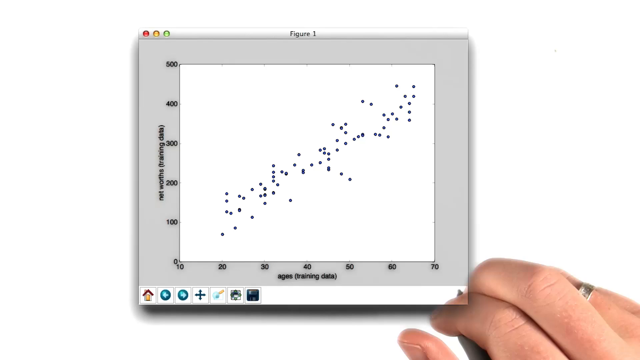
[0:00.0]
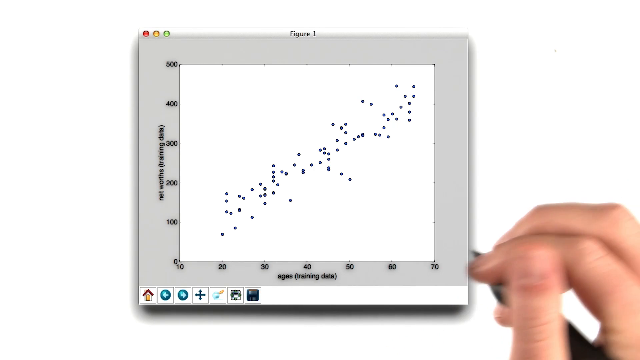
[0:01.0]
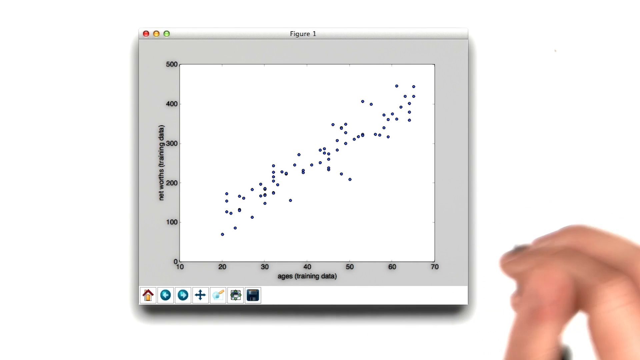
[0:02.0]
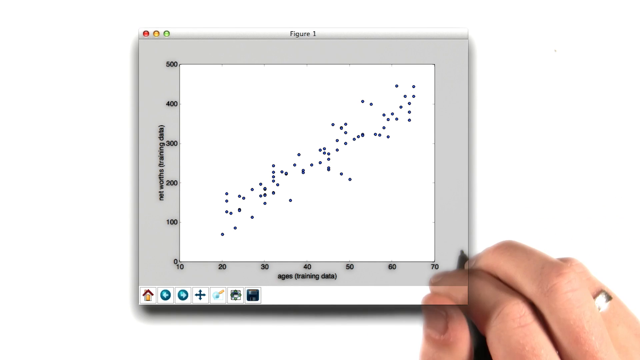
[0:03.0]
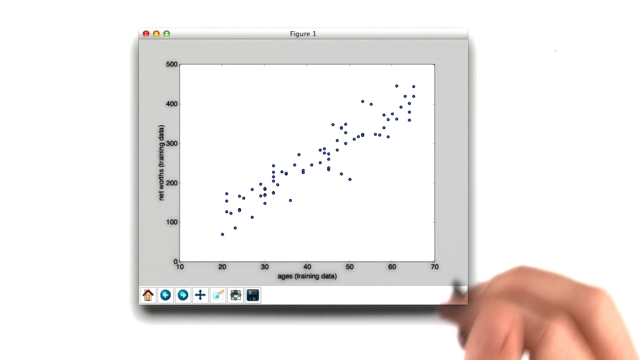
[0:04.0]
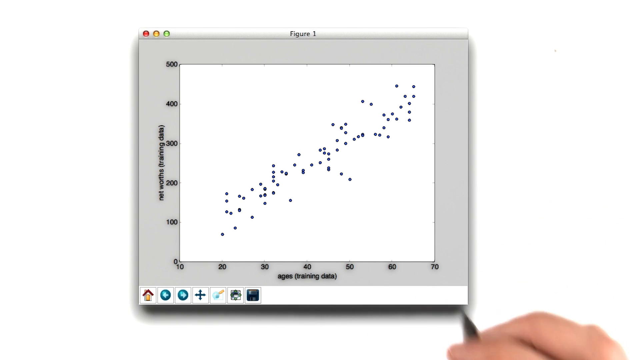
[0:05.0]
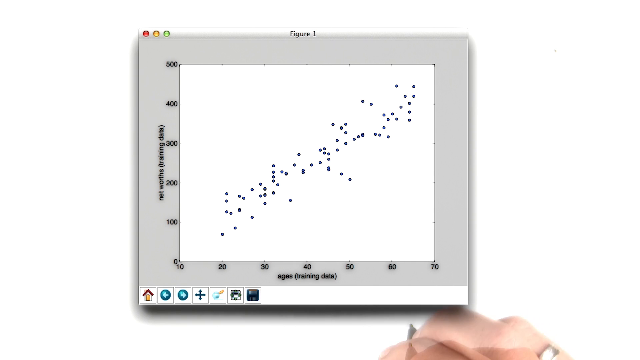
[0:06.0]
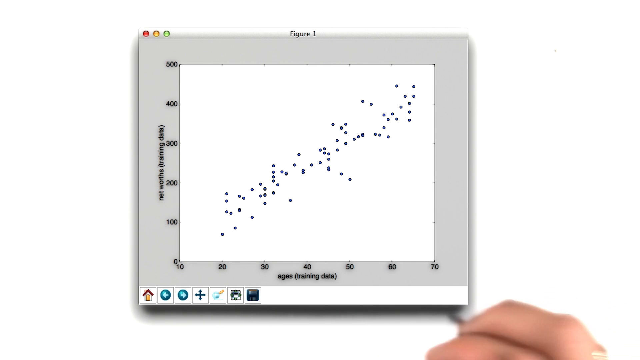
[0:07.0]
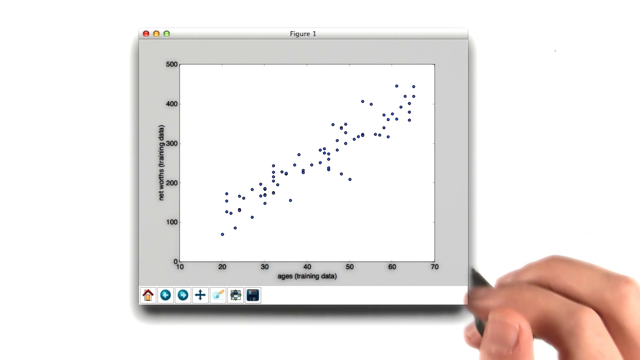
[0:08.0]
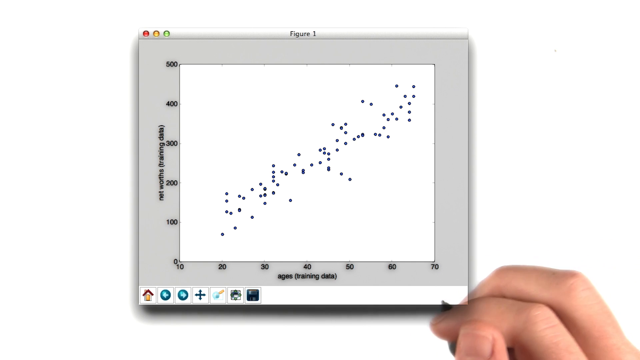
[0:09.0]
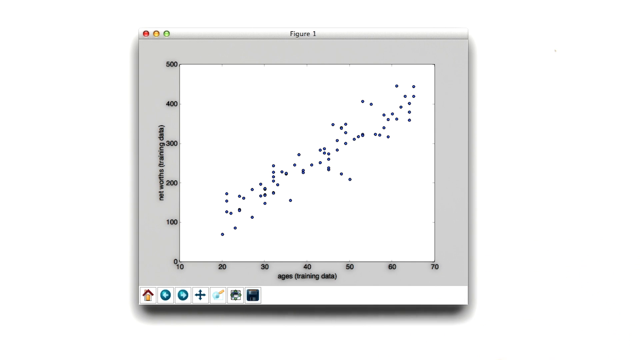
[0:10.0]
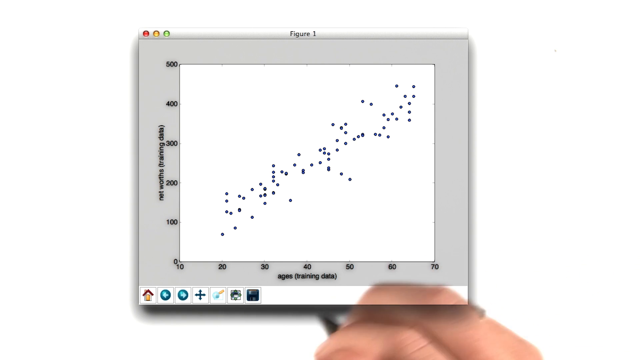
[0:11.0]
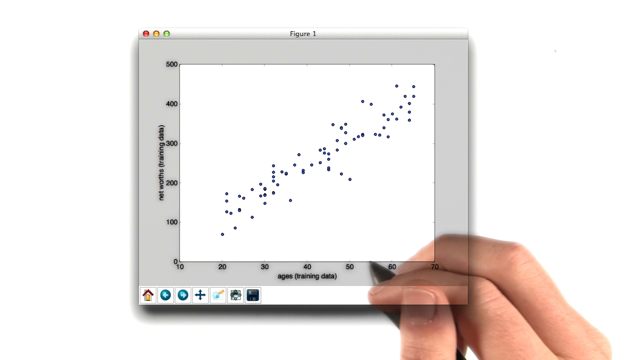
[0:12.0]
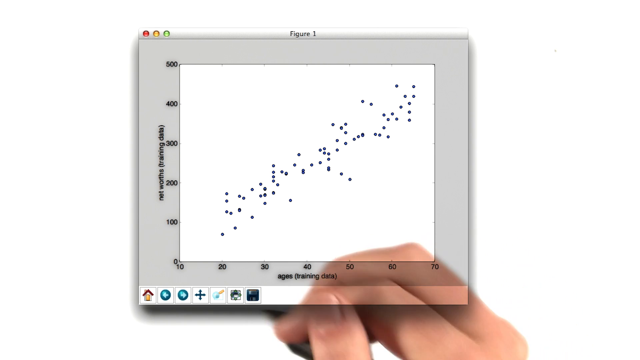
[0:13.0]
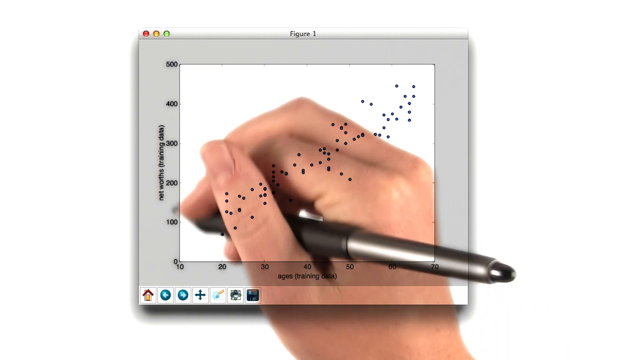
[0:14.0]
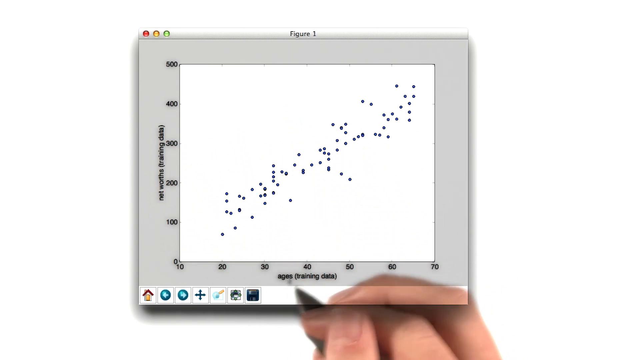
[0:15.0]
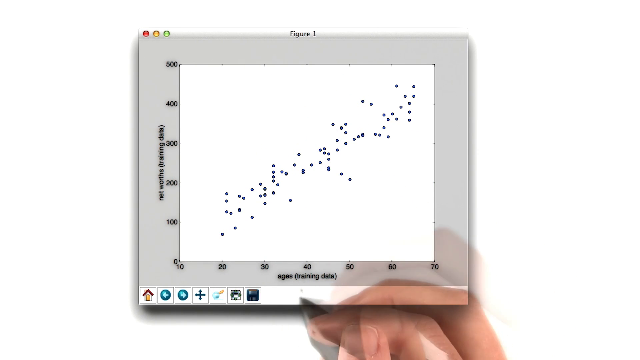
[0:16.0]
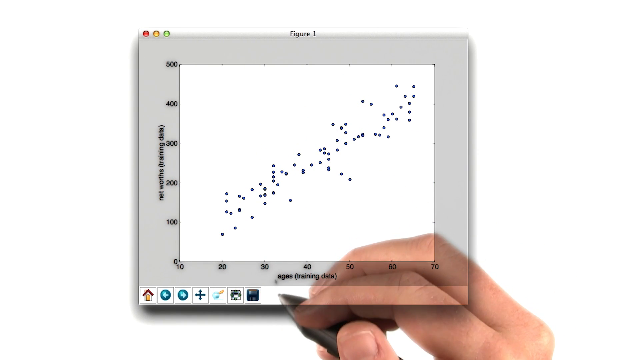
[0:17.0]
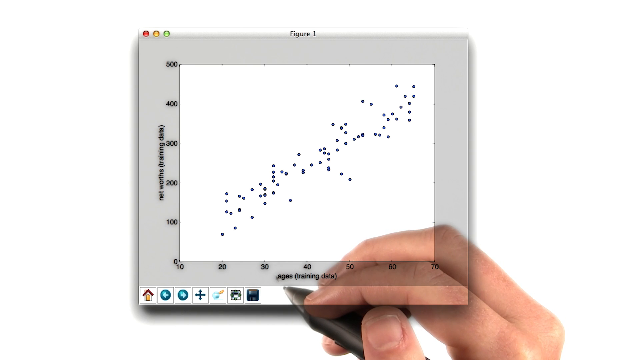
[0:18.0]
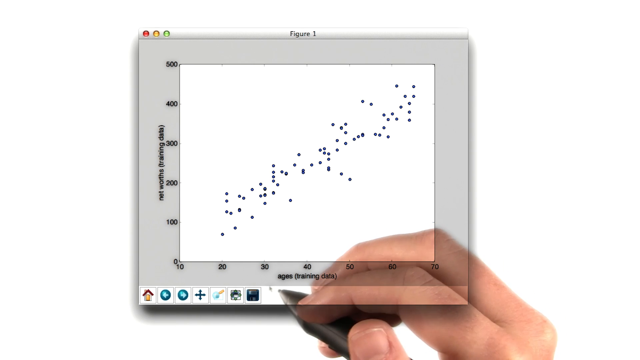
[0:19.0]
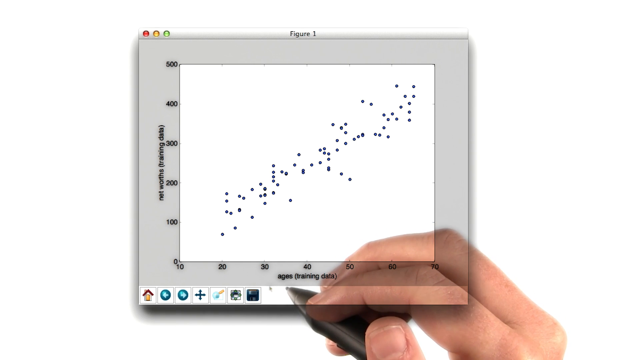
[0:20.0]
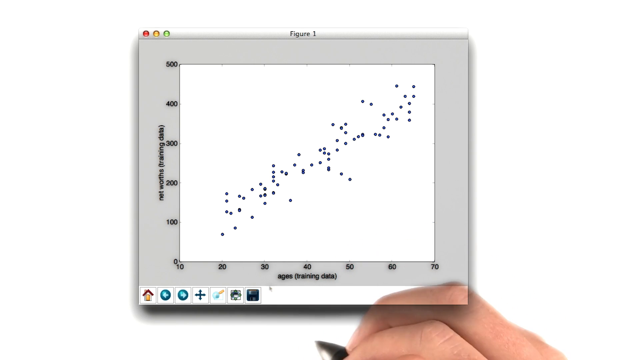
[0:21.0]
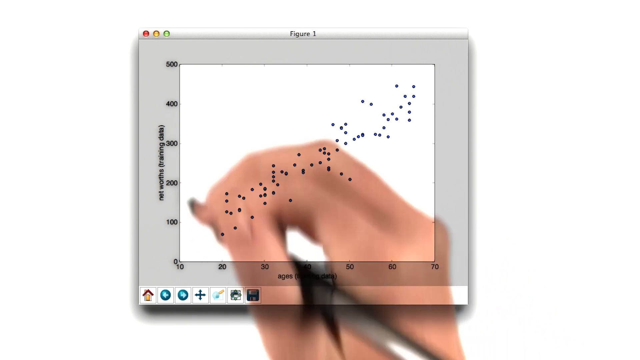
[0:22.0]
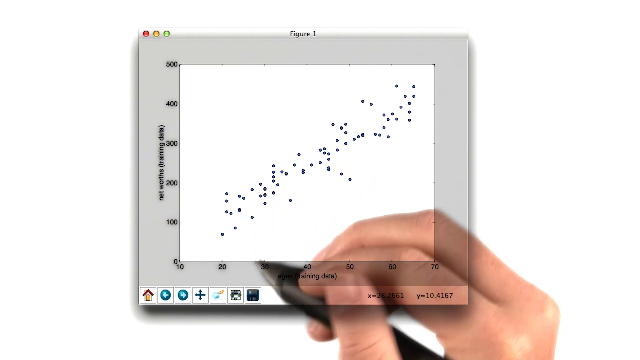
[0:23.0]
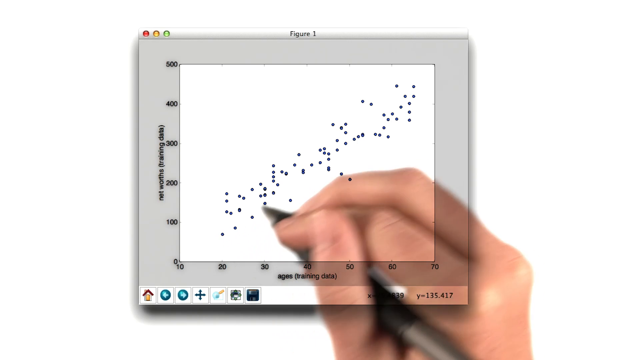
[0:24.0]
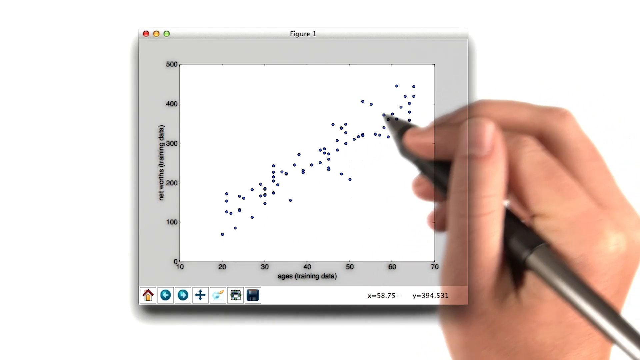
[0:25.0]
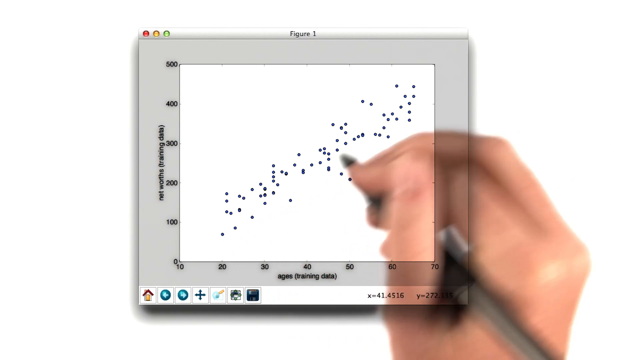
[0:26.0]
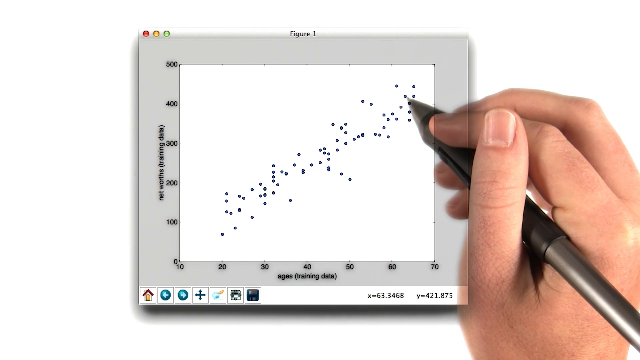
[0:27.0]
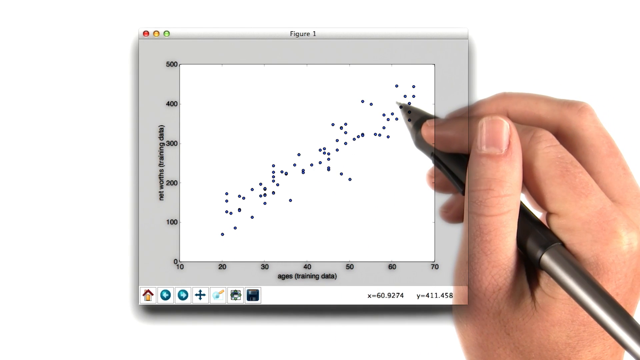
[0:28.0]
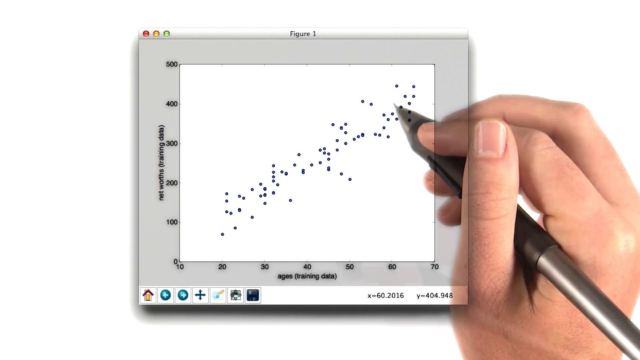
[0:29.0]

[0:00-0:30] A scatterplot graph appears, apparently showing training data, possibly for machine learning. The bottom axis shows ages, and the y-axis going up the left side shows net worths. The video is somewhat difficult to read because the resolution is low. A person uses a pen to point things out on the scatterplot, which seems to be part of a course of some sort.